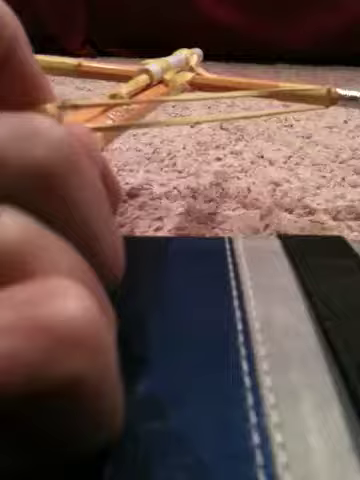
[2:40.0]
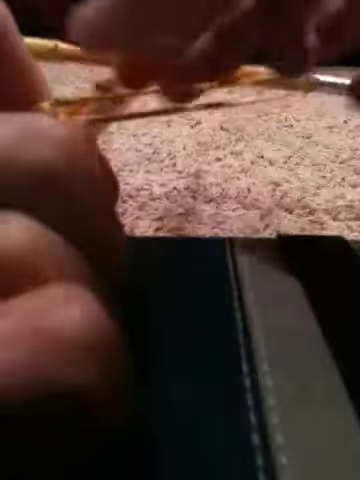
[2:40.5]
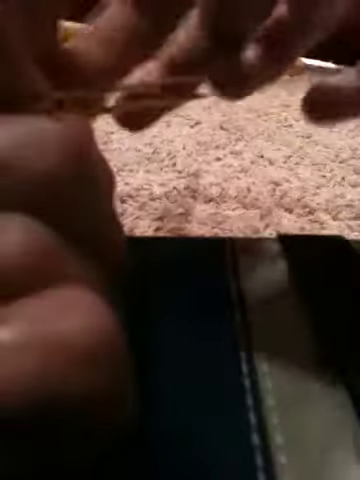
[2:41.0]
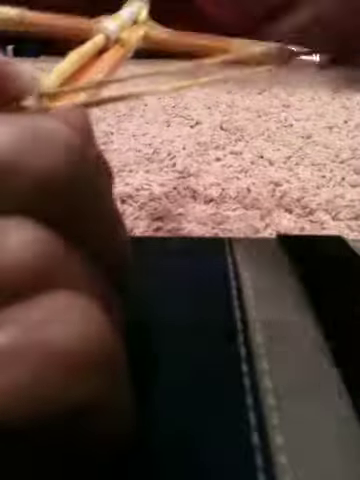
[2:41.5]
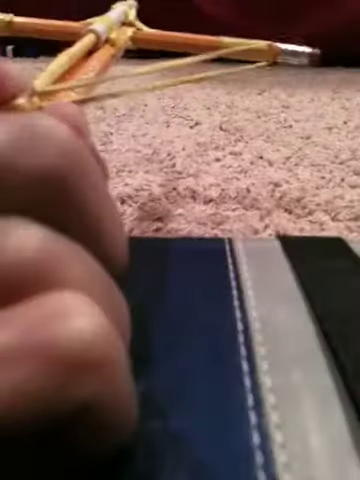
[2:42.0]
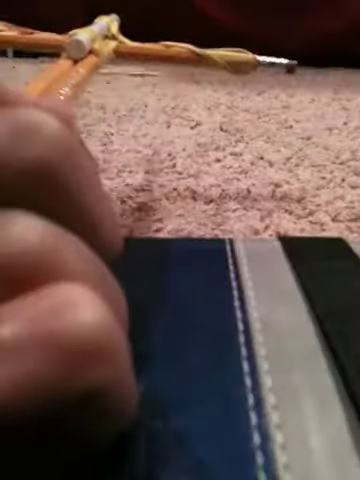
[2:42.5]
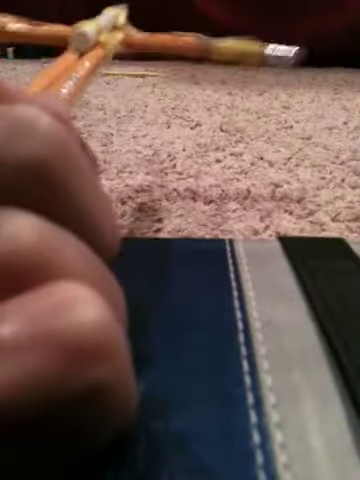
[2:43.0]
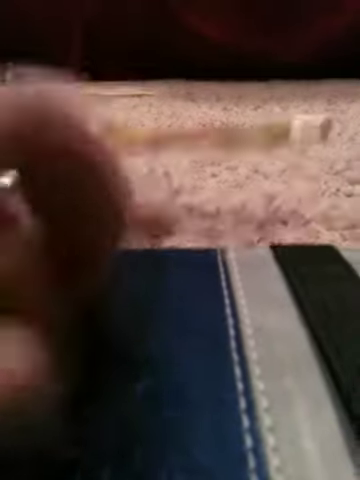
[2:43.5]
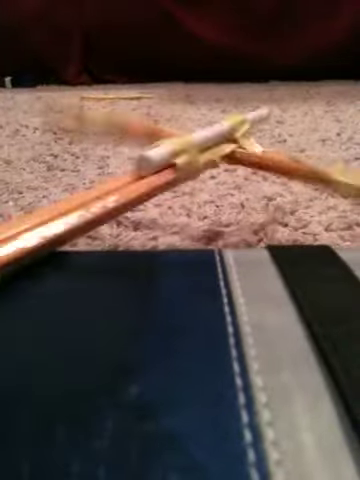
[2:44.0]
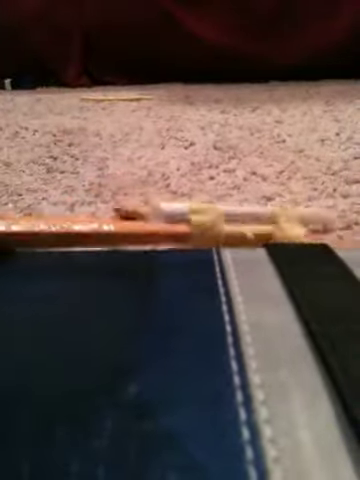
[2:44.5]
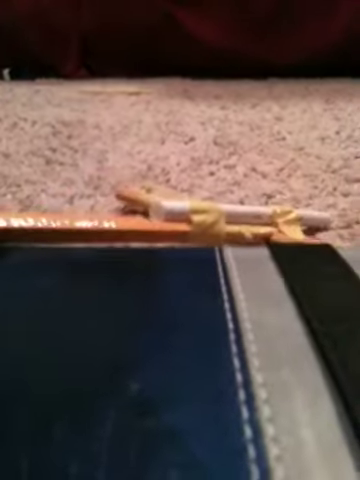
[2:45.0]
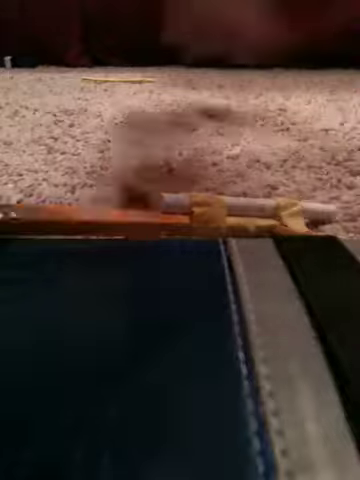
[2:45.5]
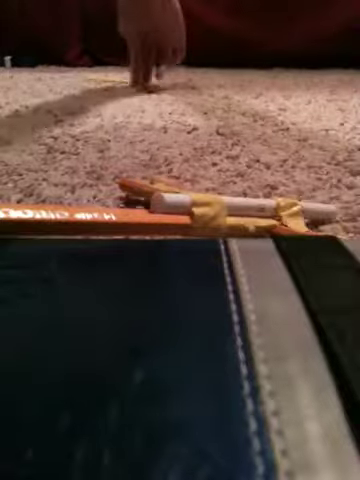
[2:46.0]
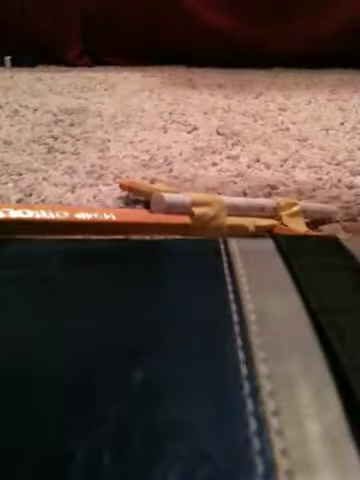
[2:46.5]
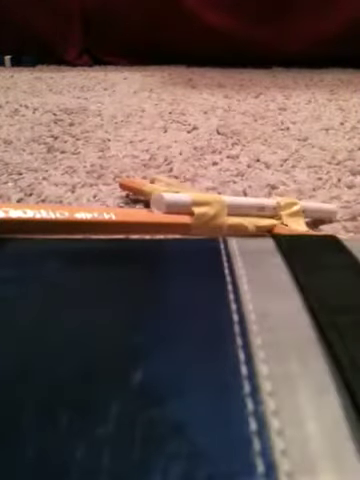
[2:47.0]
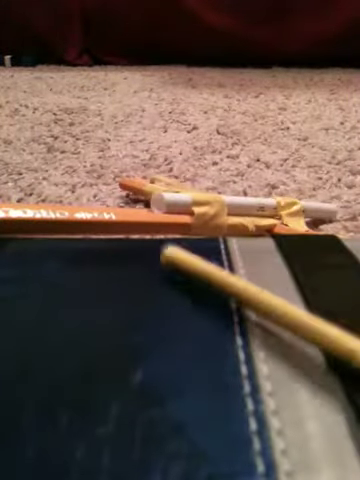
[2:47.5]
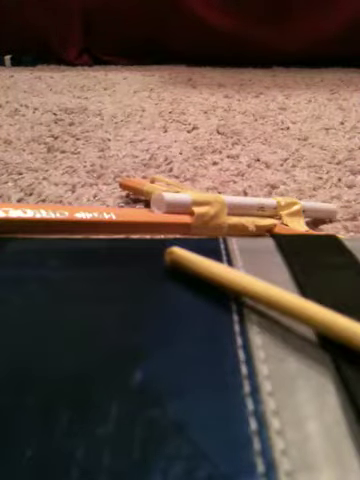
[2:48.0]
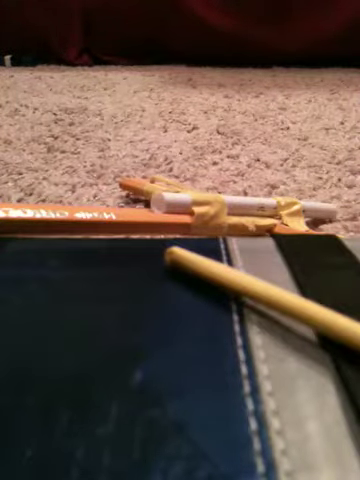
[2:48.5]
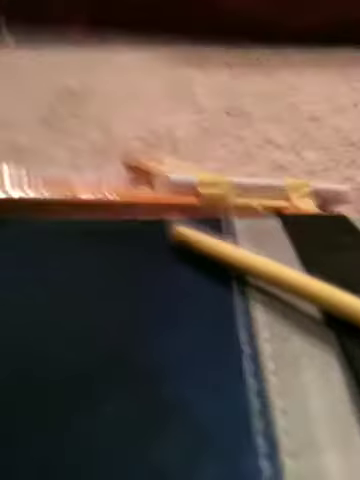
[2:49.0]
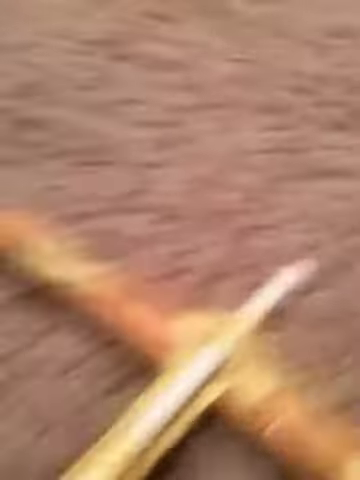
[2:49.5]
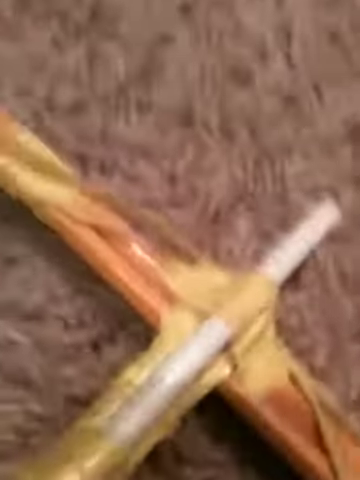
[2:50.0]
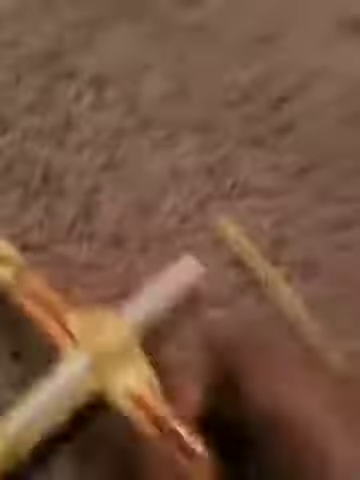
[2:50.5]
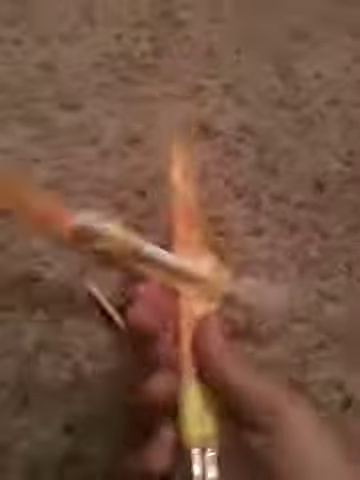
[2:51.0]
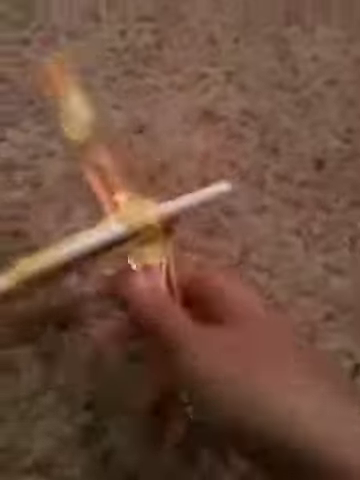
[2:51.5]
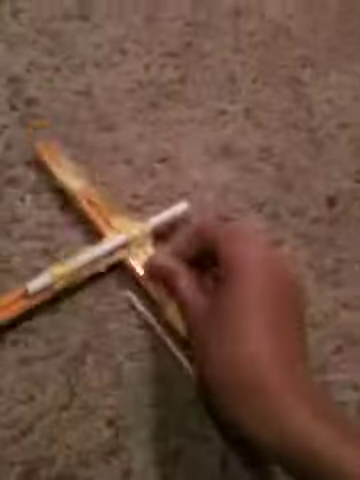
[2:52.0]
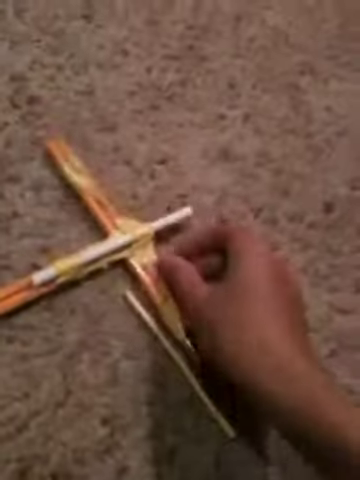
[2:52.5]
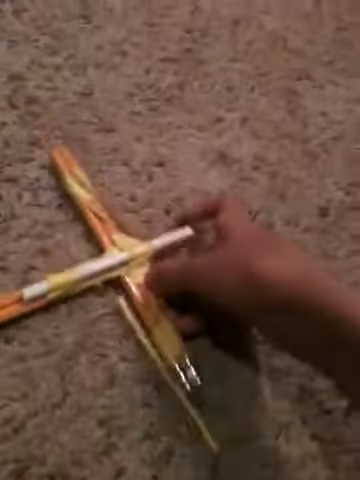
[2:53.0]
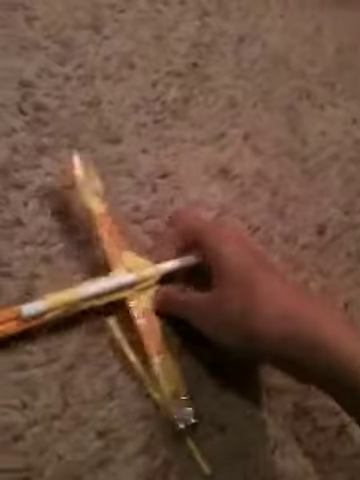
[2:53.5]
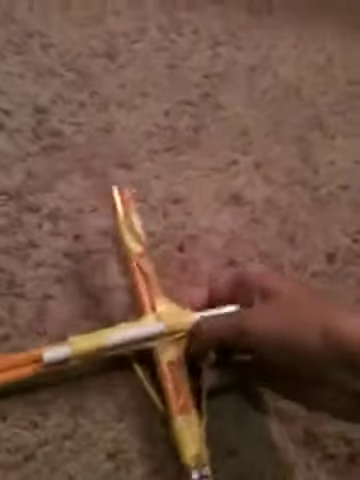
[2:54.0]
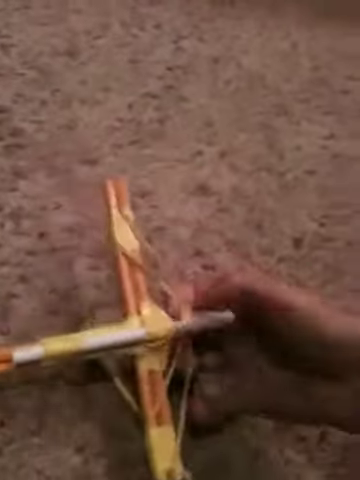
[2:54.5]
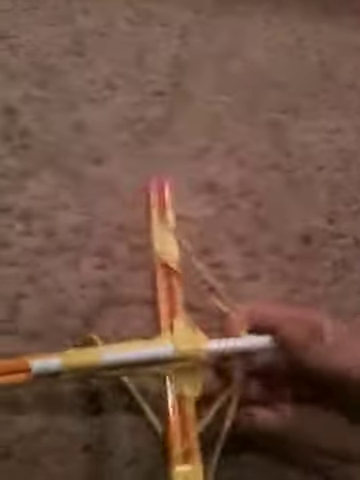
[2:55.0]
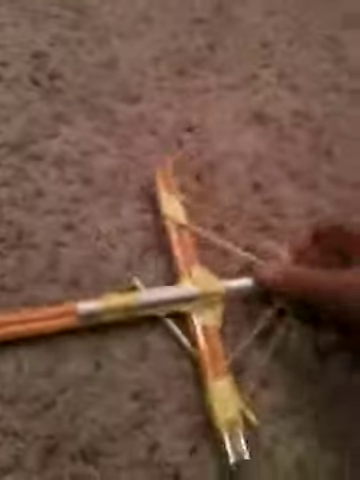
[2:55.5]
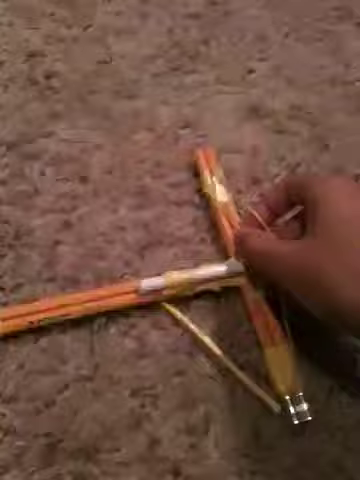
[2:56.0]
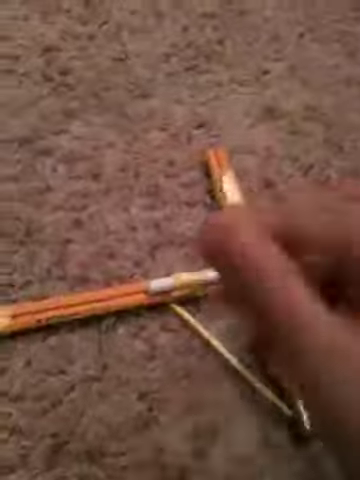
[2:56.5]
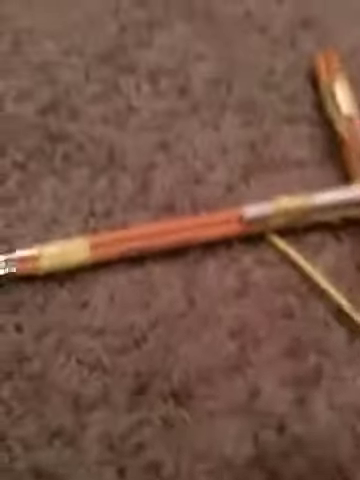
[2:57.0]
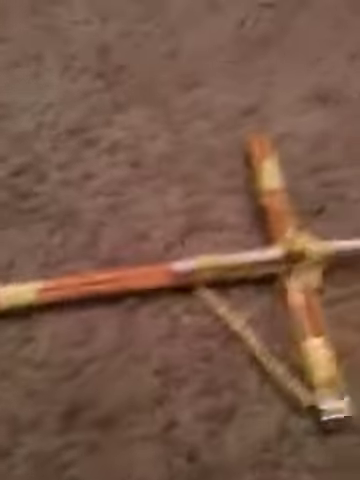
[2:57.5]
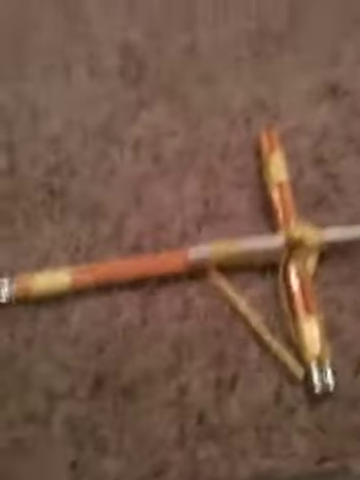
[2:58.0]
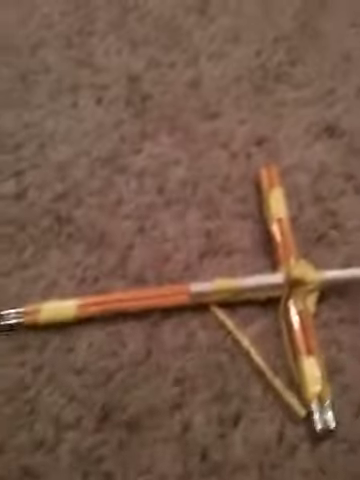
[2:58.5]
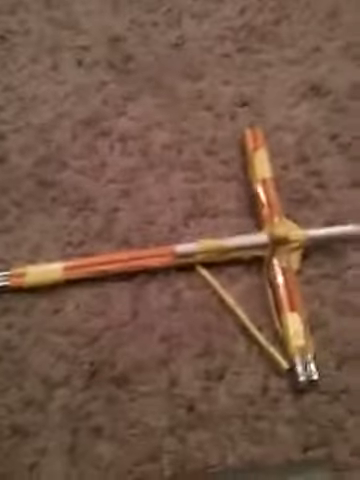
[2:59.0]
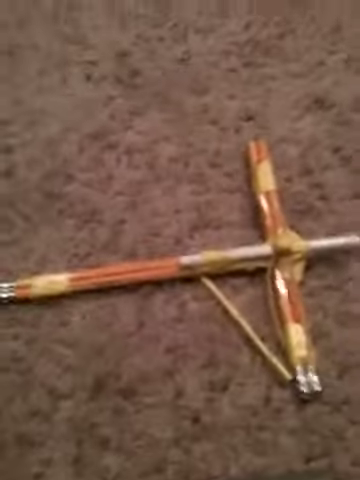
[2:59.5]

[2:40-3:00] The left hand of a Caucasian male holds the pencil crossbow device, which has an elastic band as its launching string. The right hand loads a crossbow bolt into the device, apparently feeding it through a loading port. In the foreground is a black box with a grey stripe, the midground is a light brown shaggy carpet, and the background is black. The left hand drops the crossbow device onto the carpet, and the right hand picks up the launched bolt. The bolt is dropped on the black box in the foreground, and the camera focuses on the crossbow device laid on the brown shaggy carpet. The right hand picks up the crossbow bolt device and then lays it back down onto the carpeted ground.